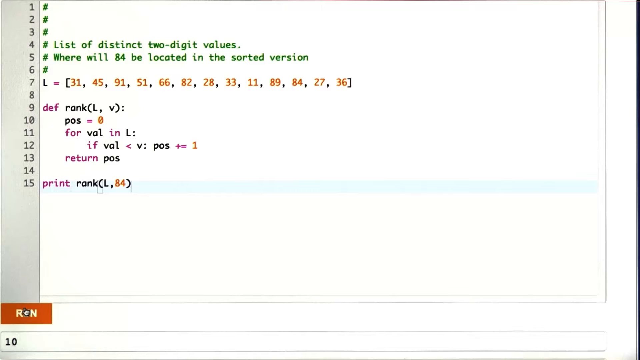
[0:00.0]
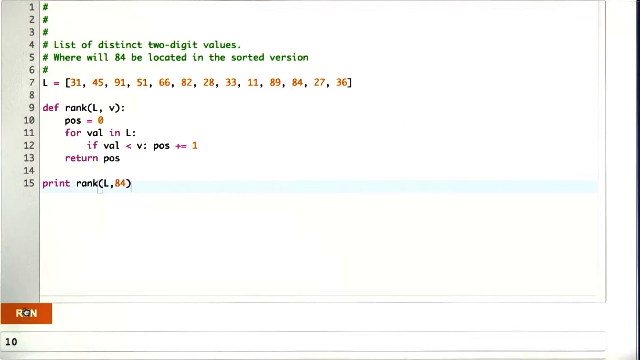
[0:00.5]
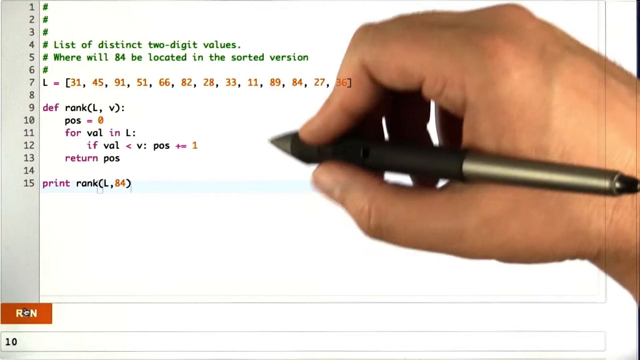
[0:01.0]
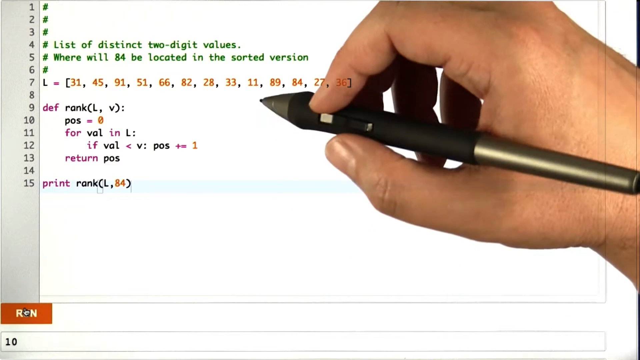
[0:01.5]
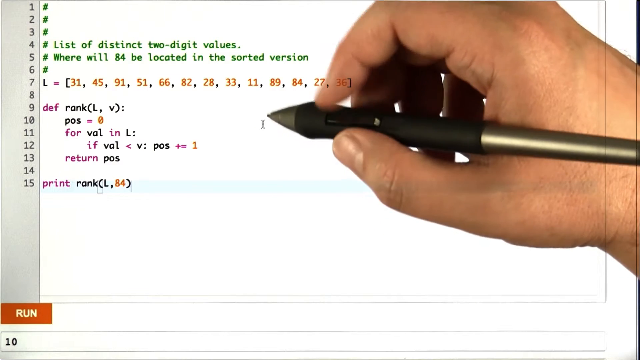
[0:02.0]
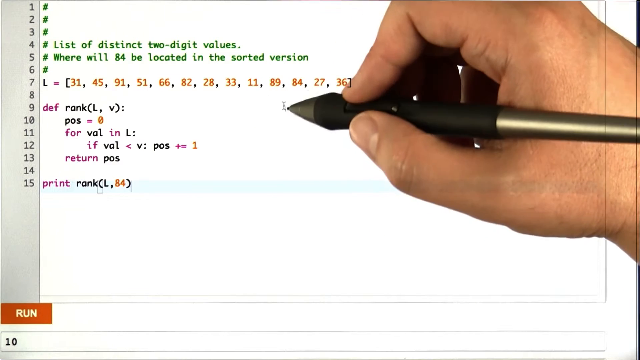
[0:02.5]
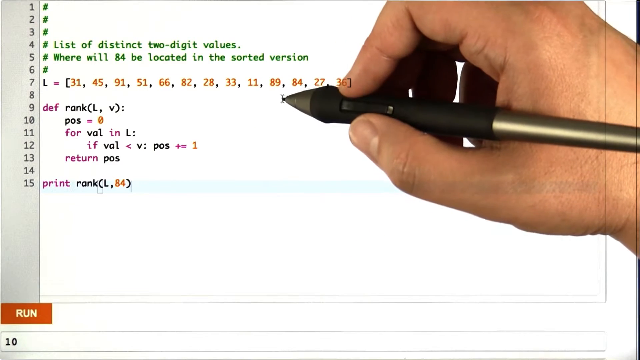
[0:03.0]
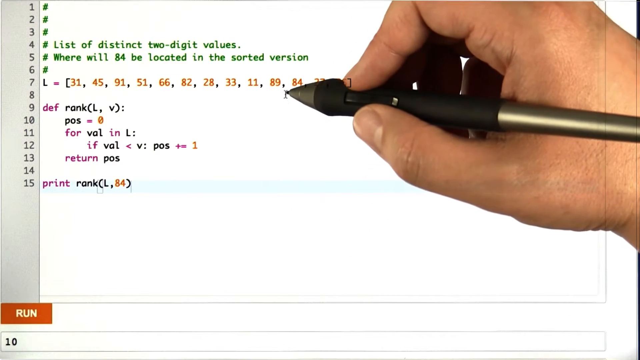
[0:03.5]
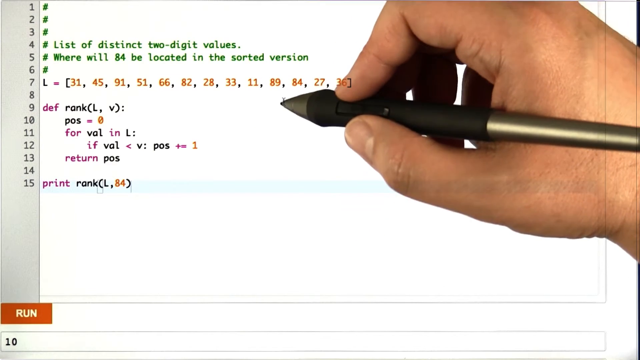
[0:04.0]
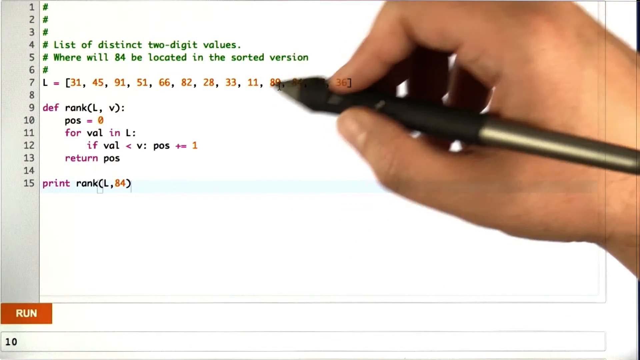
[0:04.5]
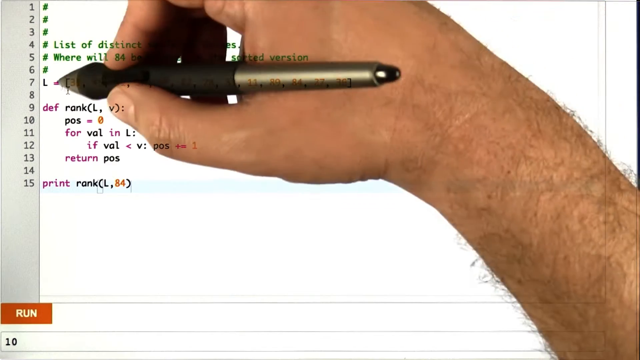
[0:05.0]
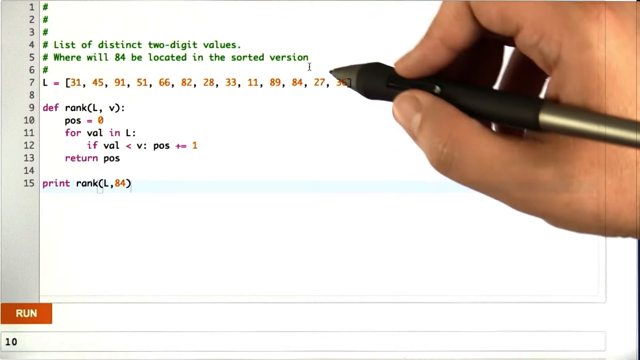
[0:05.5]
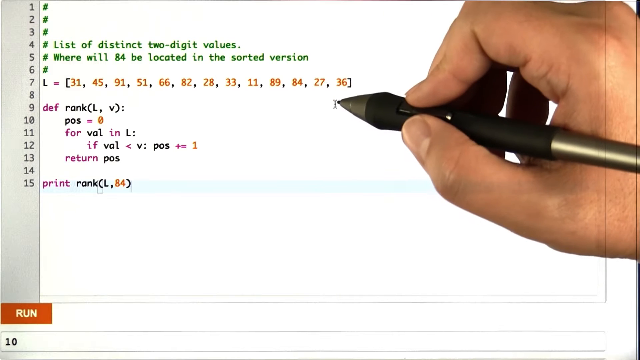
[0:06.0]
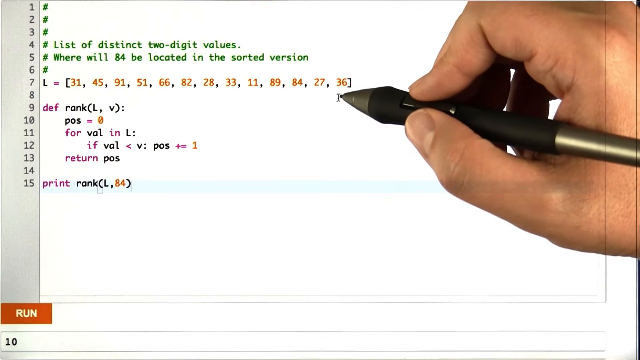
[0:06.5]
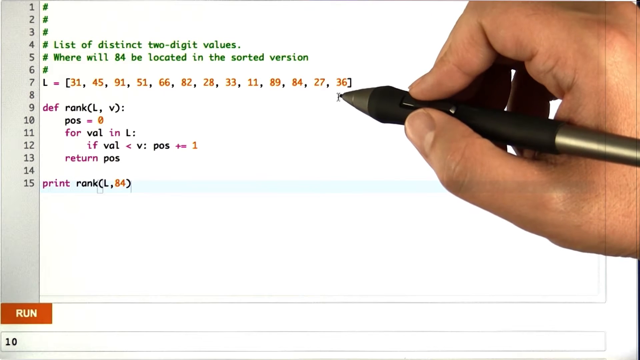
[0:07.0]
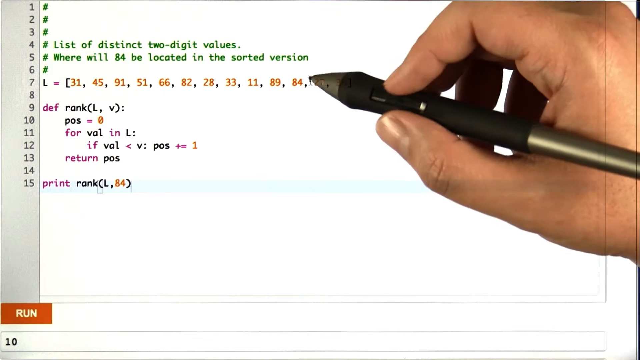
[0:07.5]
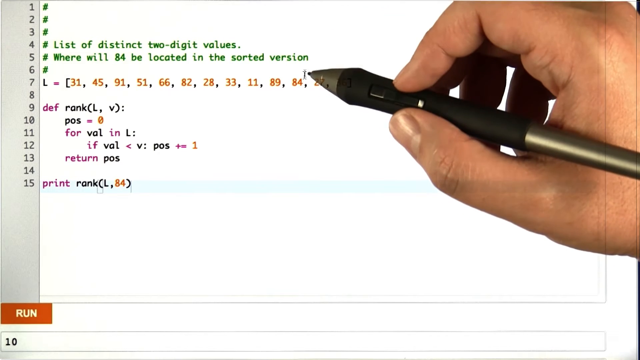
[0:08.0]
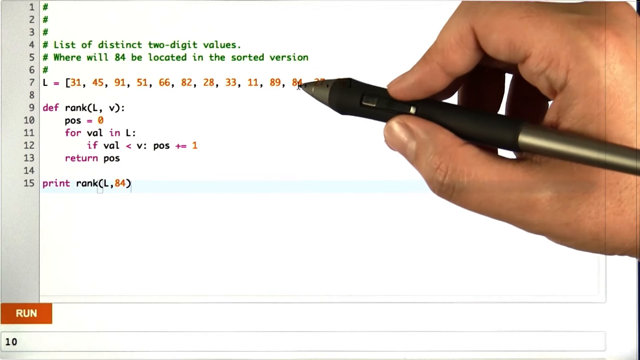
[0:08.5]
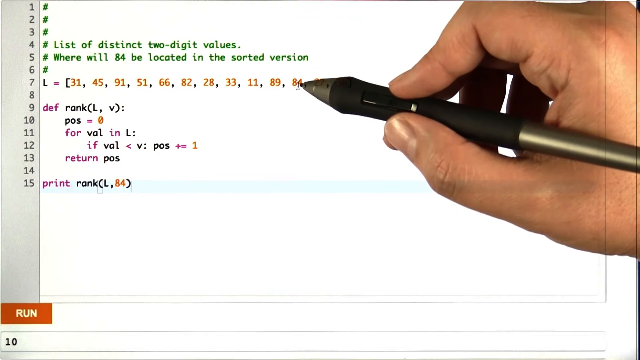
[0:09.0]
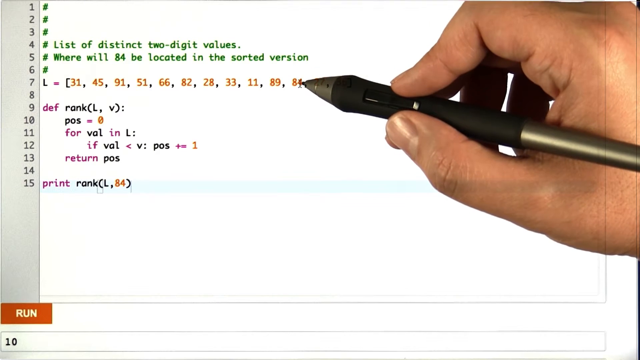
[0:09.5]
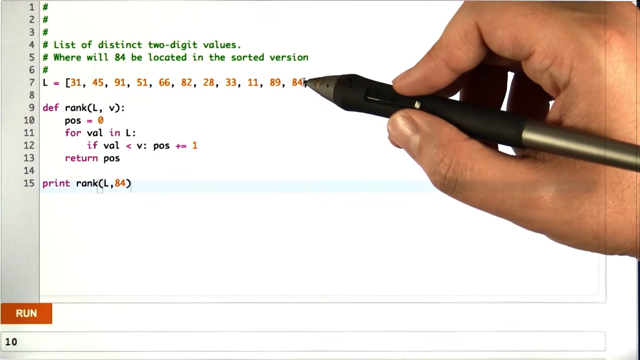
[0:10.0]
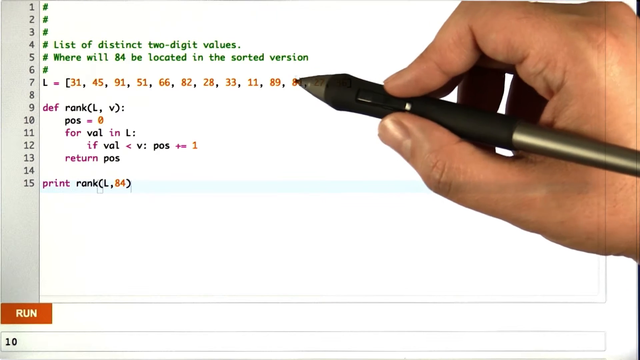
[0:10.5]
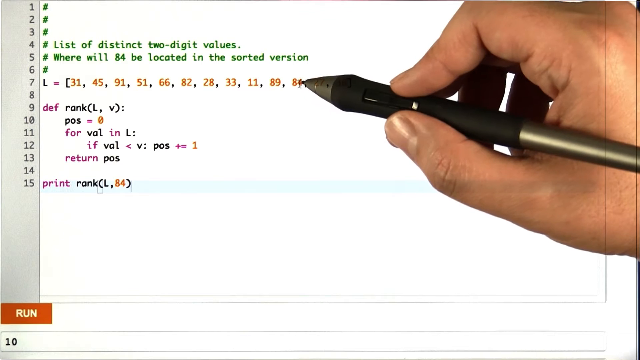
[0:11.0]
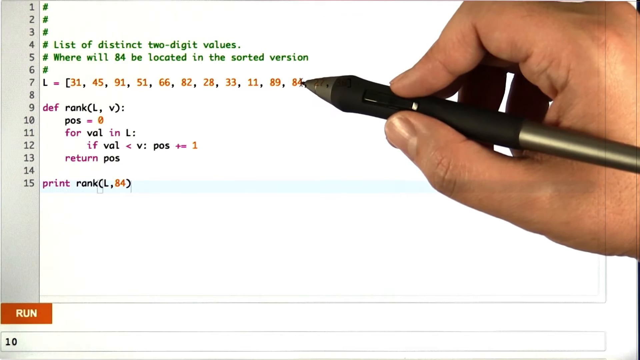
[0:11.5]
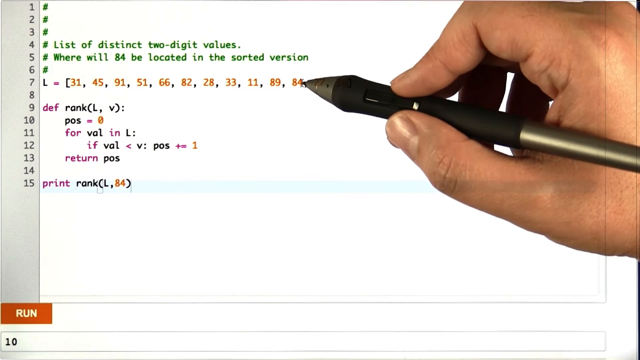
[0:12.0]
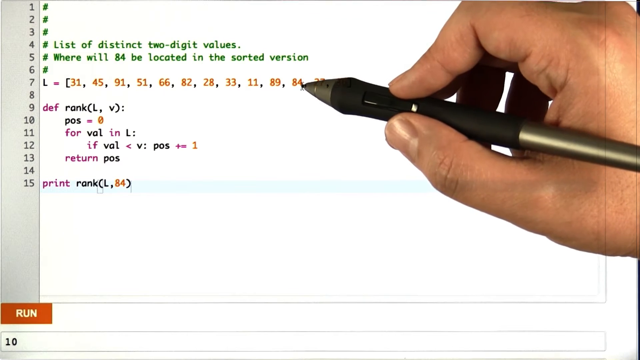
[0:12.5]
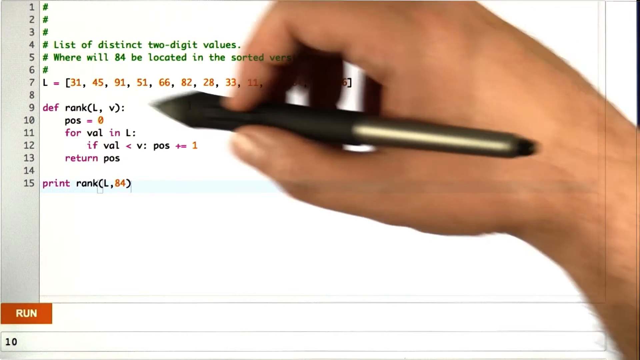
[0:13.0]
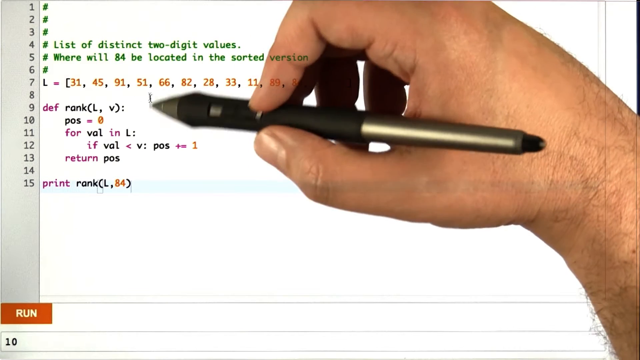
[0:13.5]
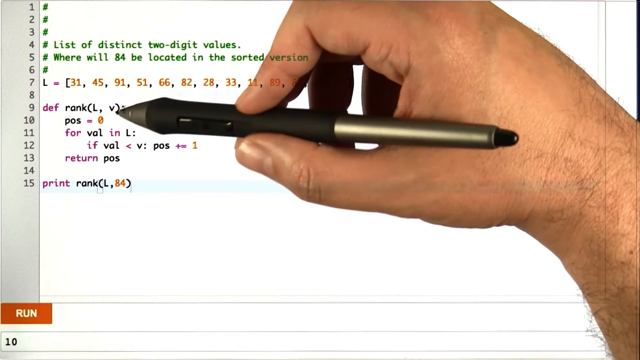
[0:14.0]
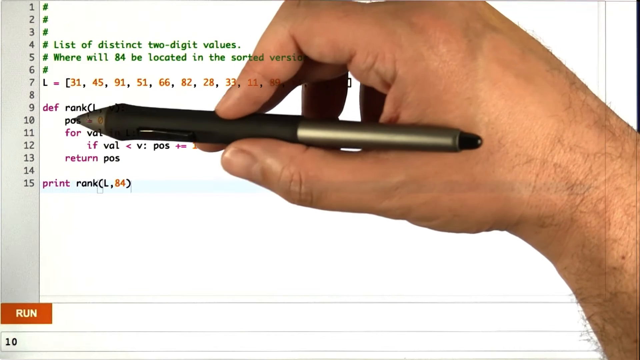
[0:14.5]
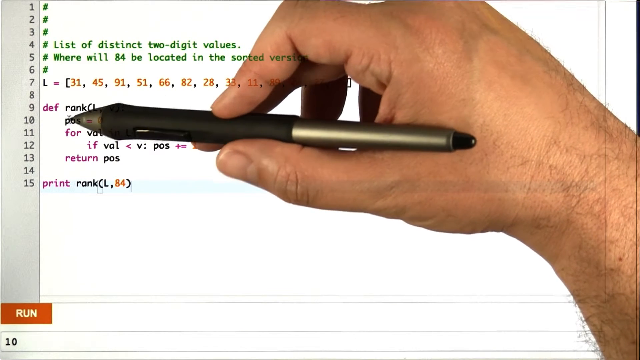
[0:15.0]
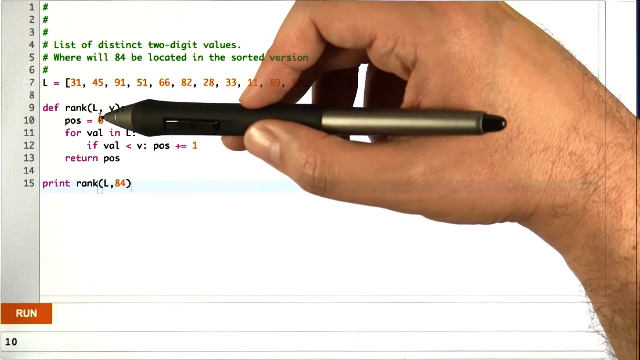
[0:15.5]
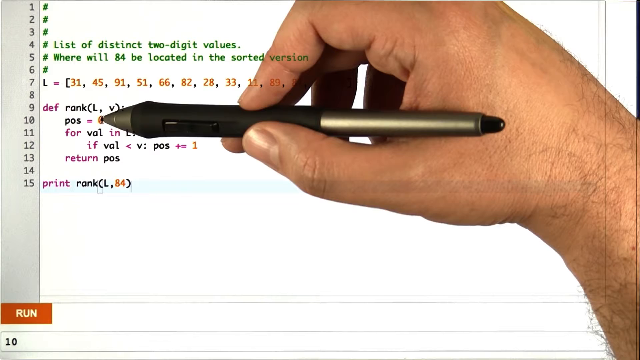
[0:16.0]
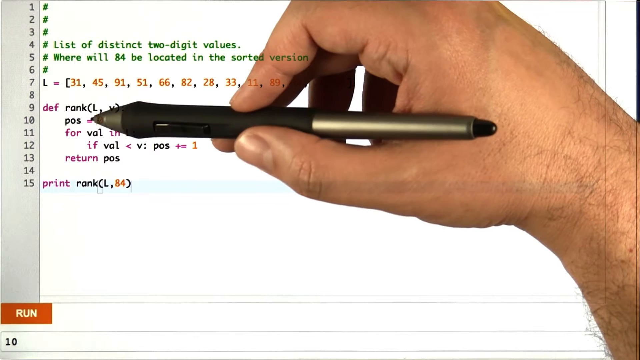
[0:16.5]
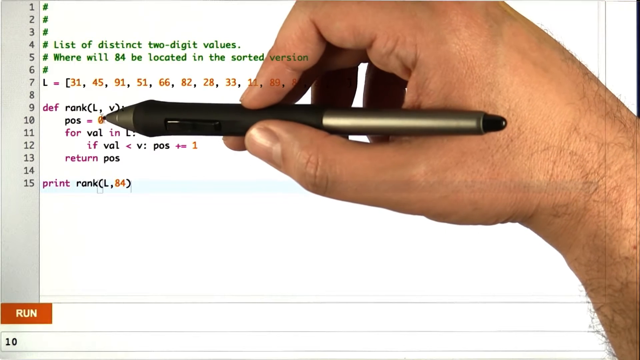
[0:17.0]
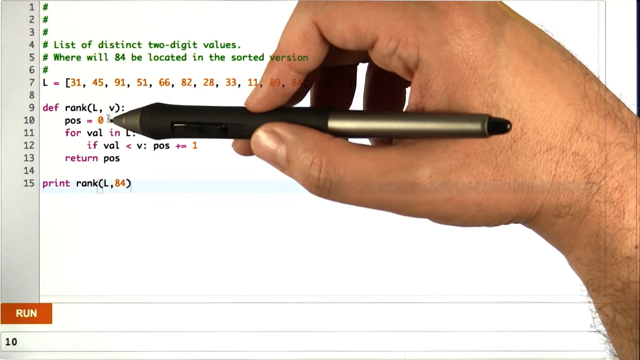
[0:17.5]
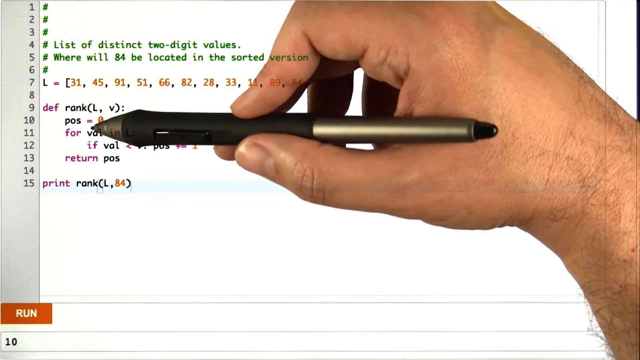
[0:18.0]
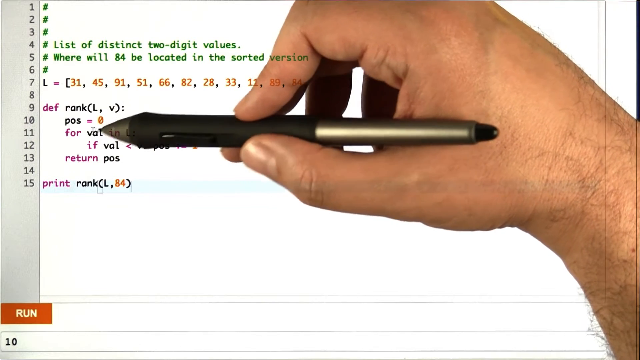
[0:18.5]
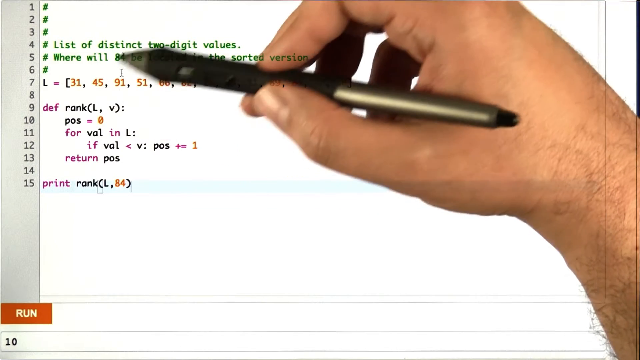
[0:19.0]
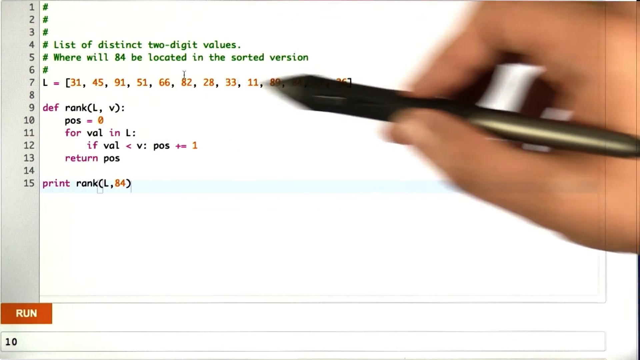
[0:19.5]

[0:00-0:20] The video shows what looks to be a coding screen, possibly Visual Basic, with 15 lines of code. The first five lines are green and begin with a number sign, marking them as comments. Line 4 reads "list of distinct two-digit values" and line 5 reads "where will 84 be located in the sorted version?" Line 7 is actual code with no number signs: L equals, in brackets, 31, 45, 91, 51, 66, 82, 28, 33, 11, 89, 84, 27, 36. Line 9 reads "def rank" followed by L comma V in brackets and a colon. Line 10 reads "POS = 0", line 11 reads "for val in L:", line 12 reads "if val < V: POS += 1", and line 13 reads "return POS". Line 14 is blank, and line 15 reads "print rank" followed by L comma 84 in brackets. A hand holding a black pen then appears on the screen; it starts at the number 84, moves back and forth, returns to 84, and keeps moving back and forth, apparently pointing out lines of code.